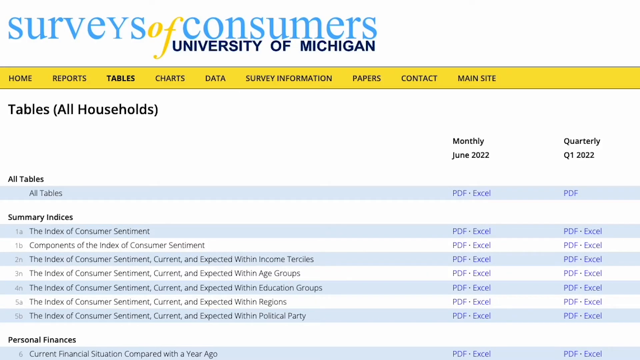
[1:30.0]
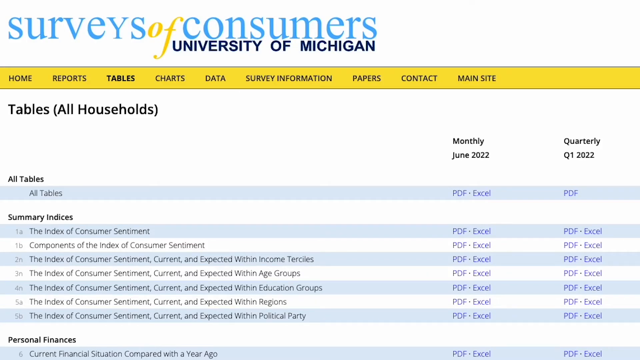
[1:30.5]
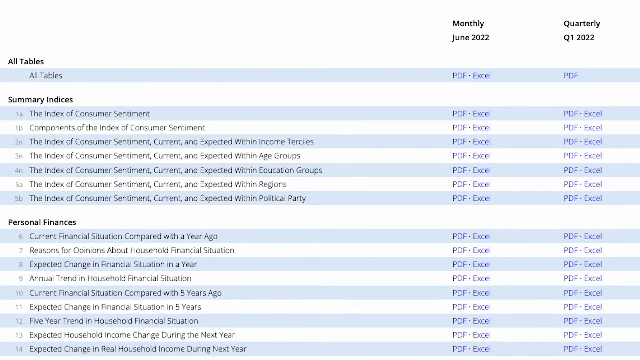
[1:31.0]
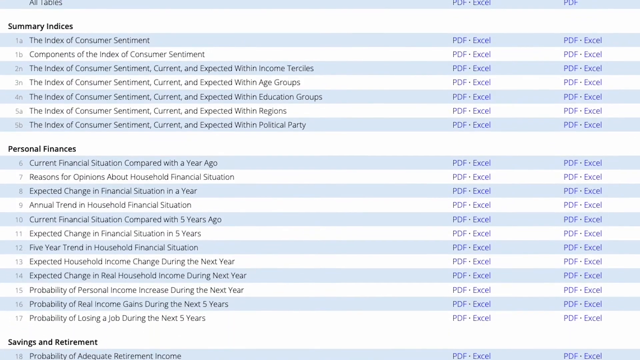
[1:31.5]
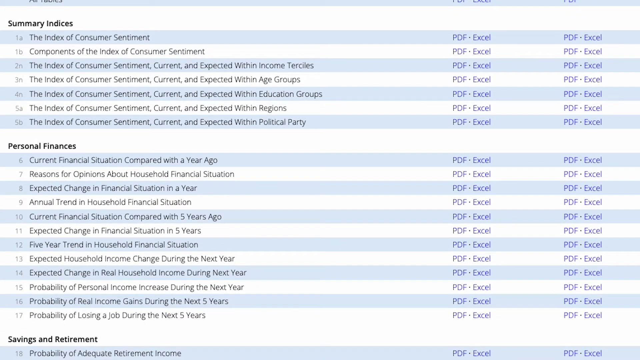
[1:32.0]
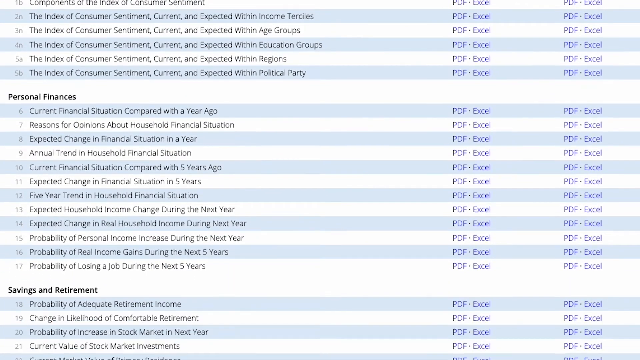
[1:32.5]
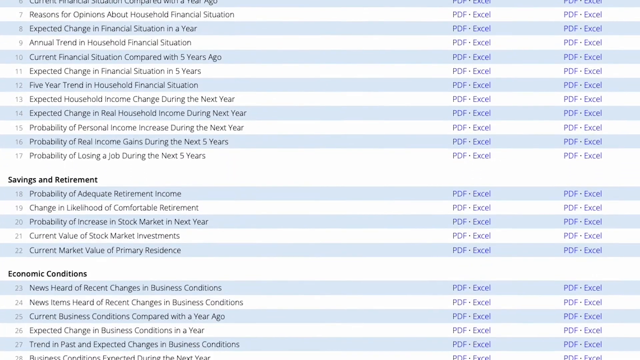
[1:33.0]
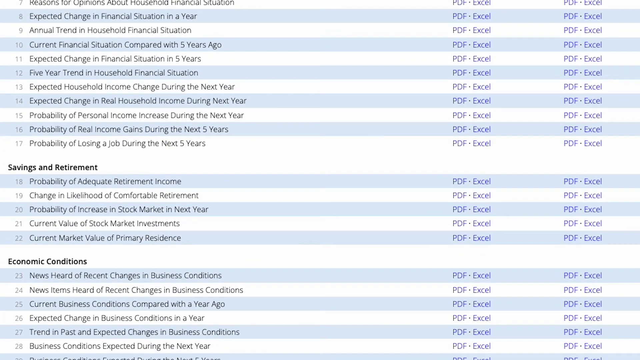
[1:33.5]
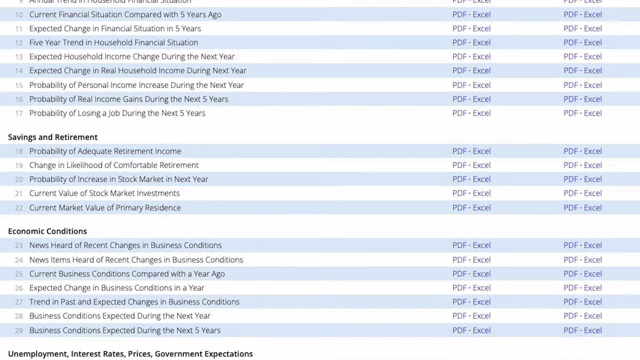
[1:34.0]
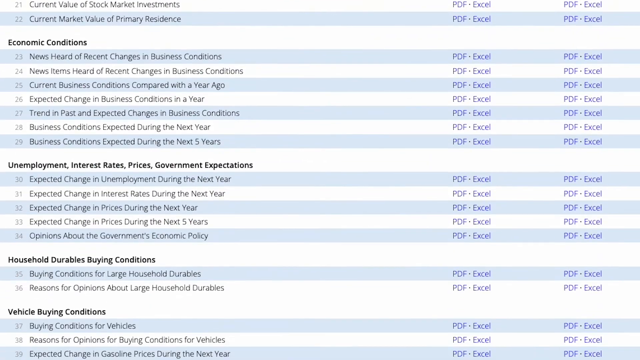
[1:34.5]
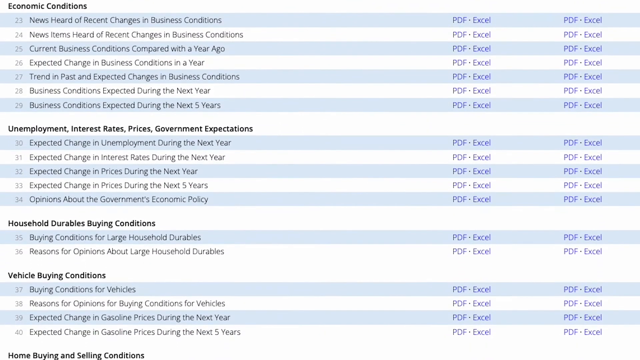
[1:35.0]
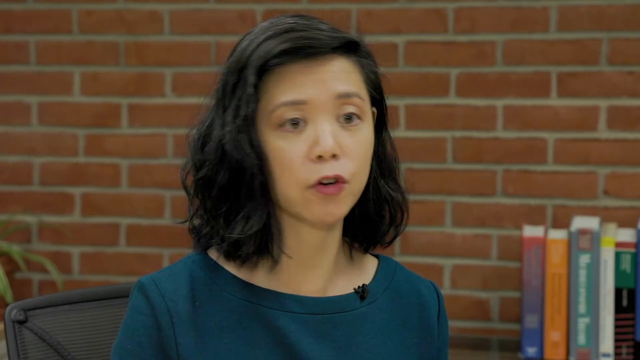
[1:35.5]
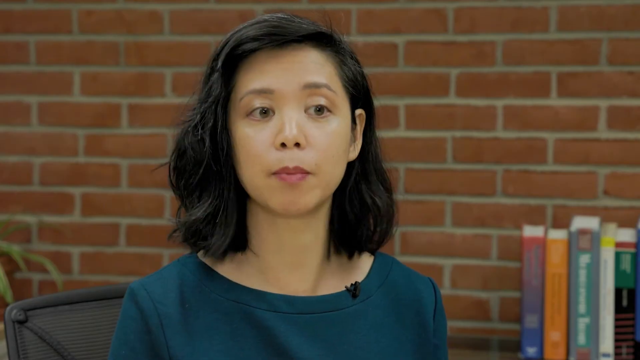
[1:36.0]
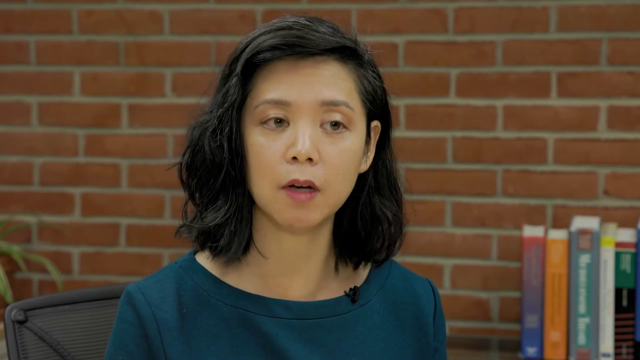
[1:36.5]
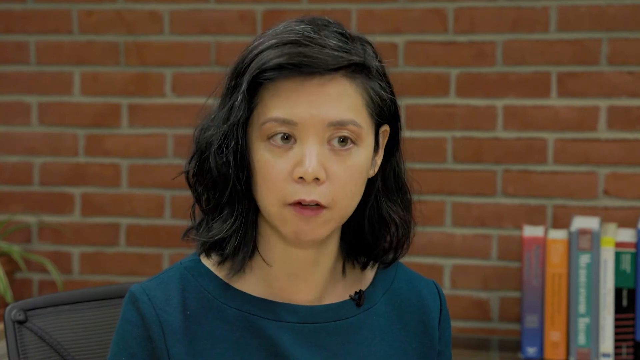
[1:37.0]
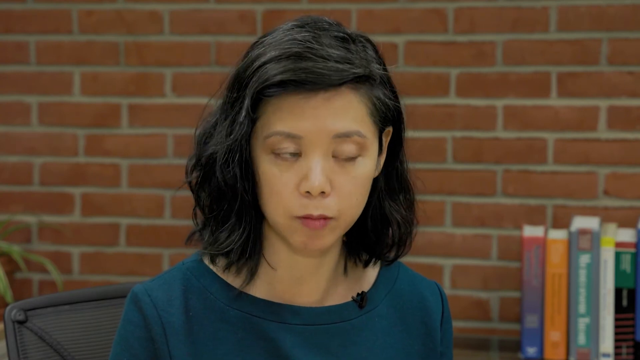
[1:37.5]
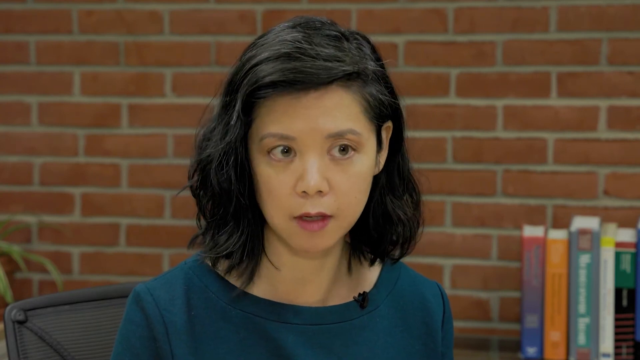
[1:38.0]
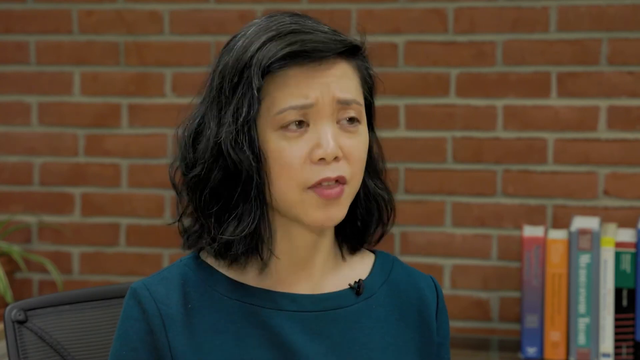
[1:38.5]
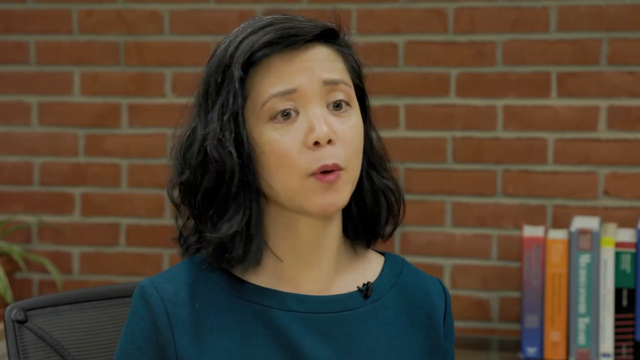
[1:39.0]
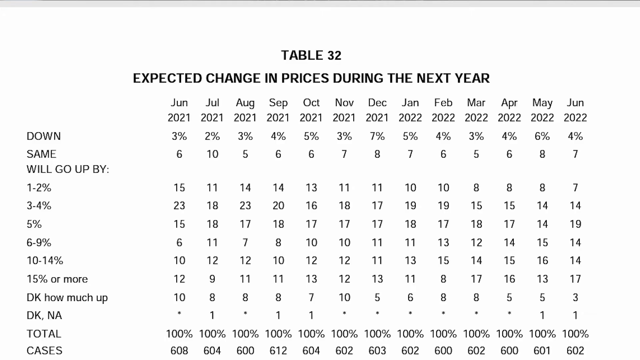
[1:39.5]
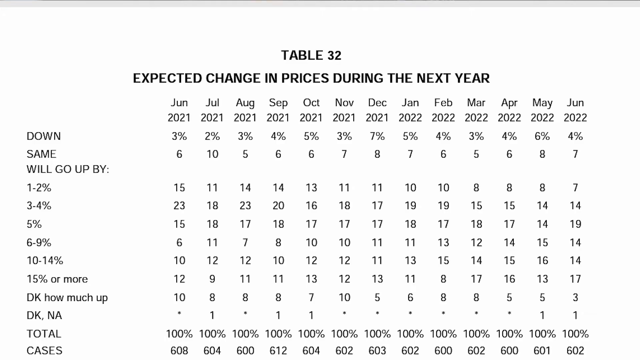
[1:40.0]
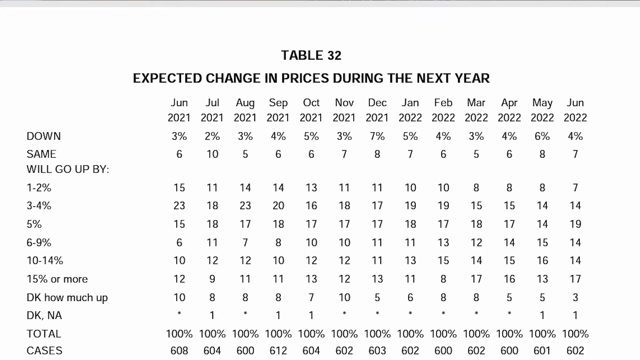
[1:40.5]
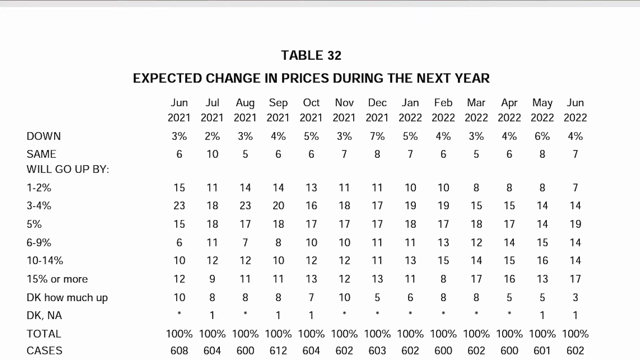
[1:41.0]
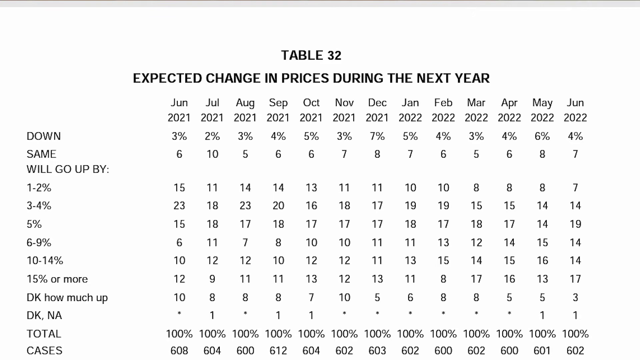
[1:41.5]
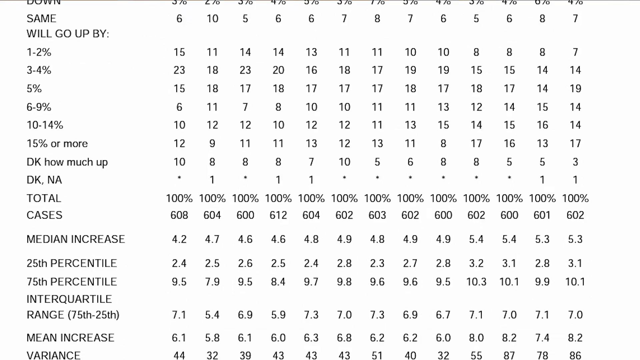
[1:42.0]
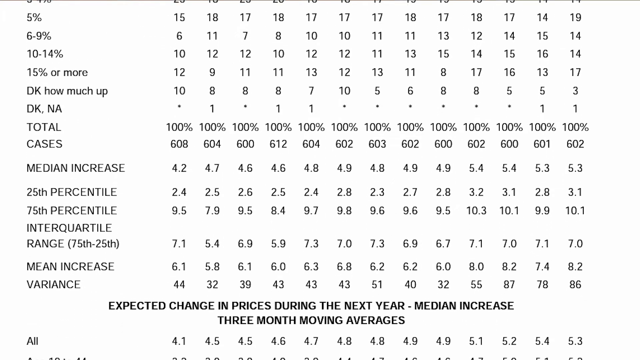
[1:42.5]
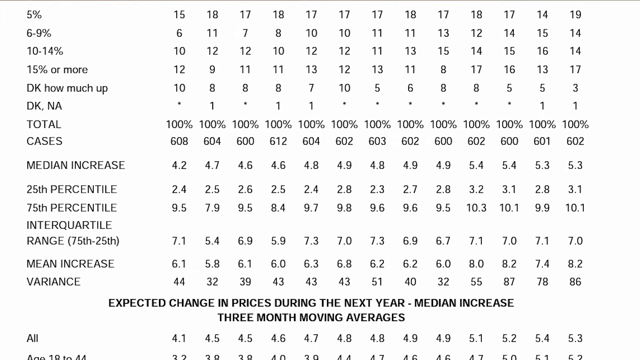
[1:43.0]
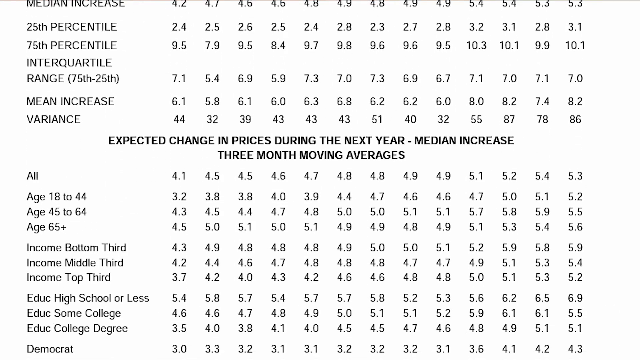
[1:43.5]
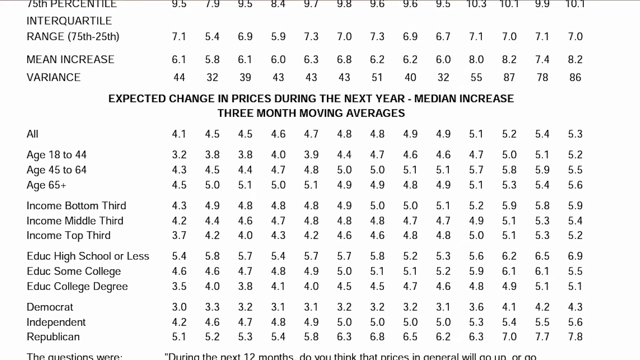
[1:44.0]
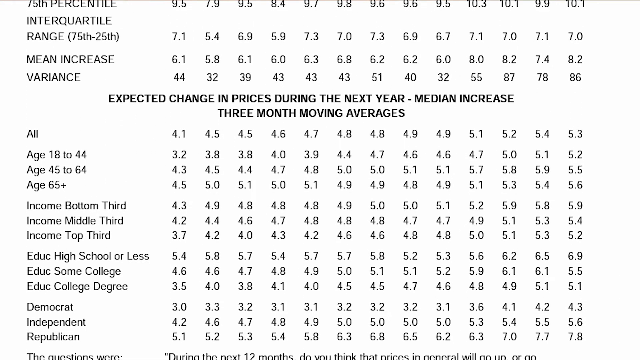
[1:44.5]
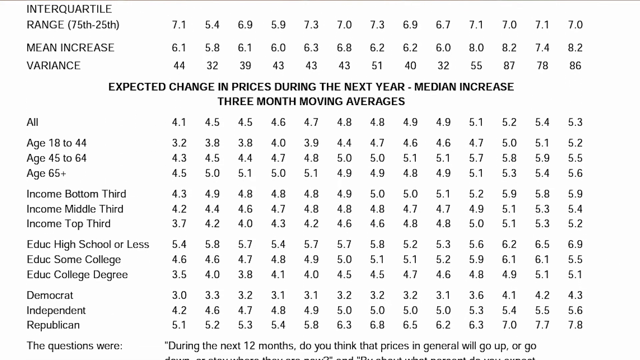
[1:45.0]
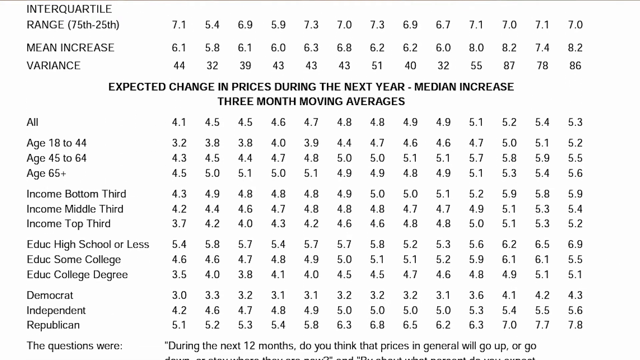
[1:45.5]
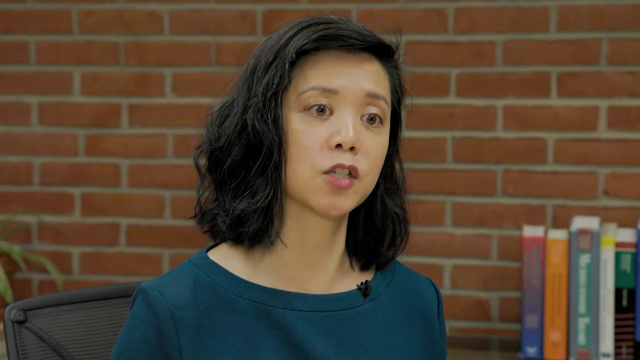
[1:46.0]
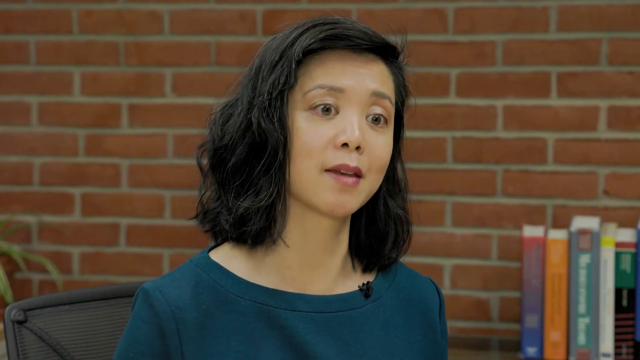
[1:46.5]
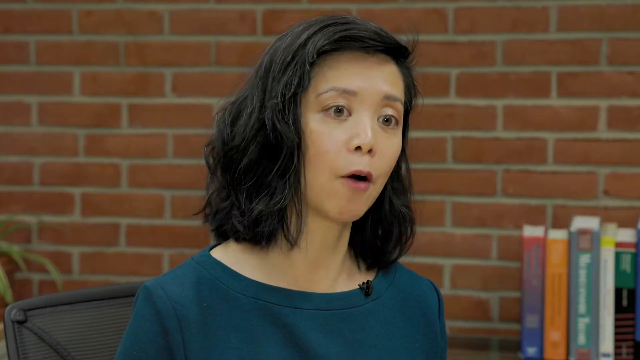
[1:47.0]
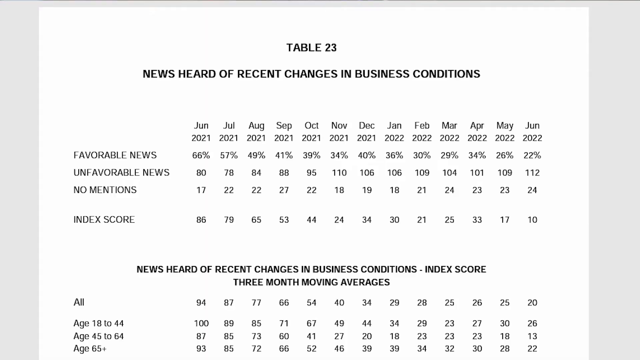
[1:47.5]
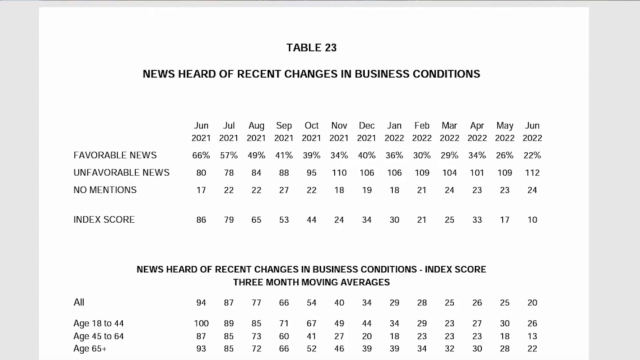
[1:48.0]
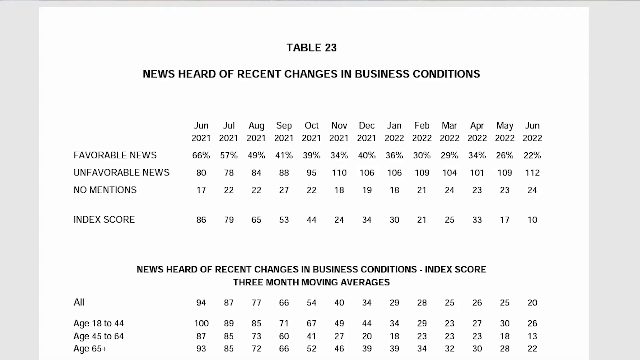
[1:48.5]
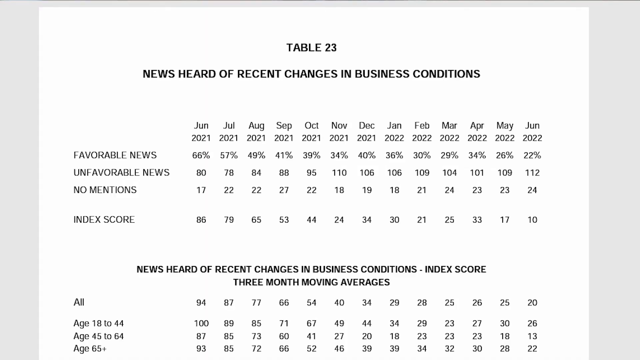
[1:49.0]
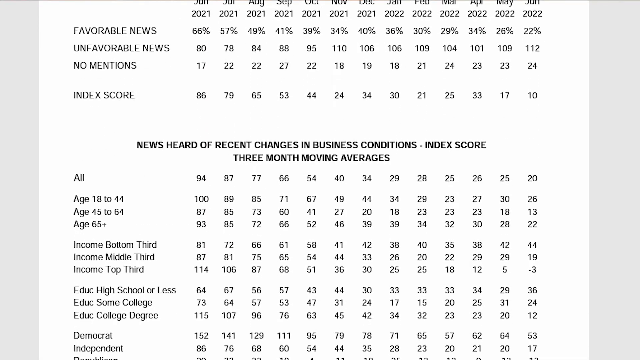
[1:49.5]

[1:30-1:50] The chart scrolls up and down, showing different reports. The video returns to the interview with Director Joanne. Next is table 32, "expected change in prices during the next year," listing data from June 2021 through June 2022; the options on the left-hand side include goes down, stays the same, and will go up by, followed by 1 to 2 percent, 3 to 4 percent, 5 percent, 6 to 9 percent and so on. The table scrolls down to show median figures, including "expected change in prices during the next year" and "median increase." The page then shows table 23, "news heard of recent changes in the business conditions," with the options favorable news, unfavorable news, no mentions, and index scores.